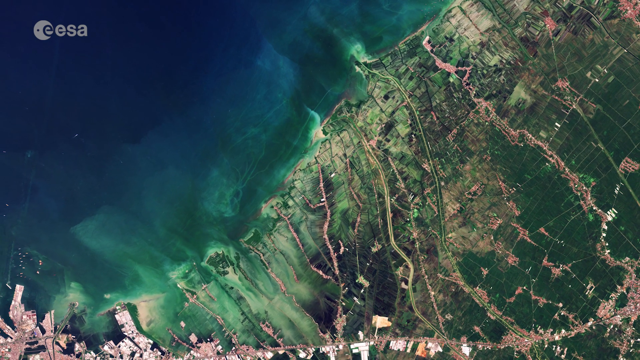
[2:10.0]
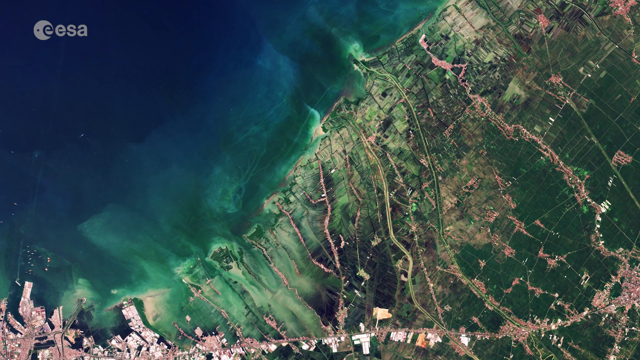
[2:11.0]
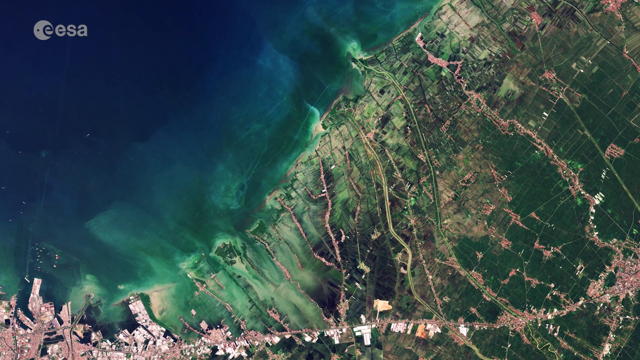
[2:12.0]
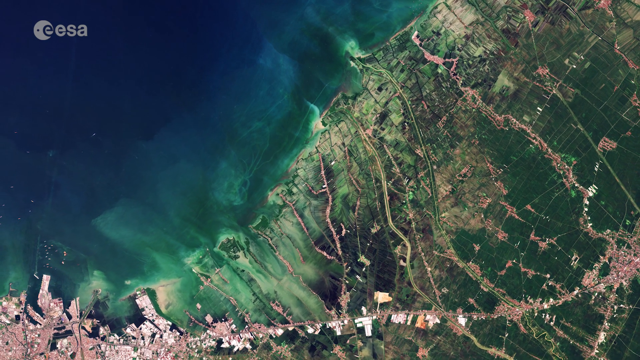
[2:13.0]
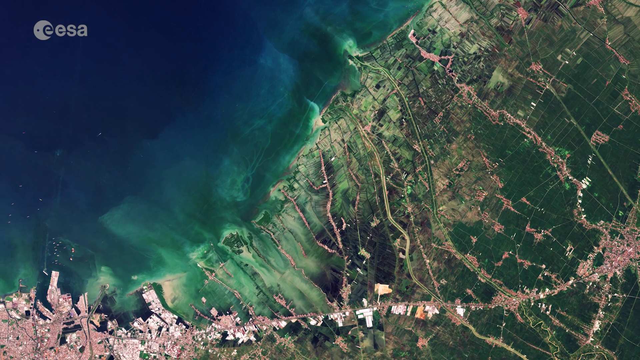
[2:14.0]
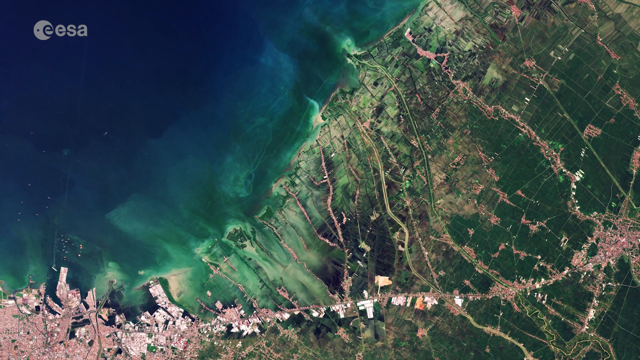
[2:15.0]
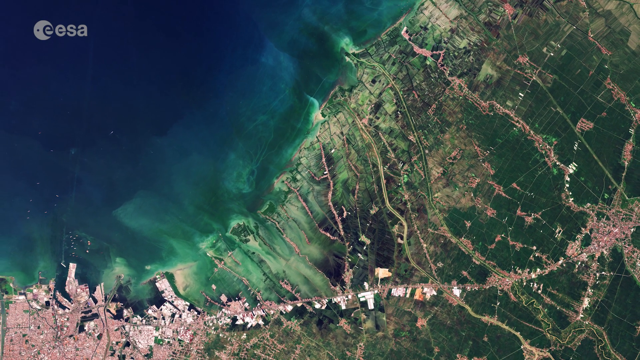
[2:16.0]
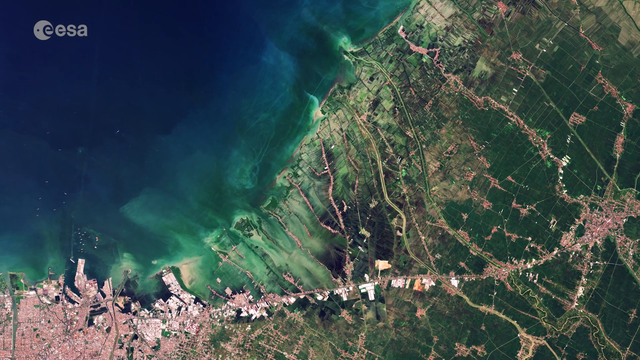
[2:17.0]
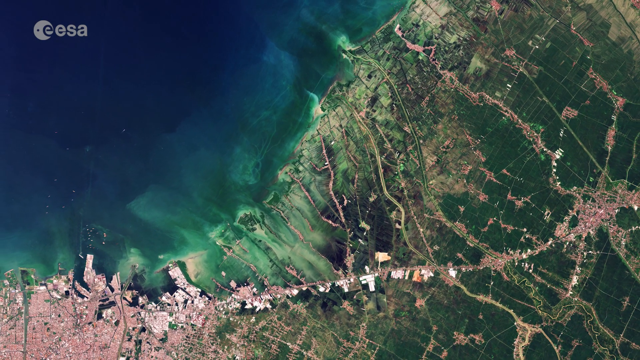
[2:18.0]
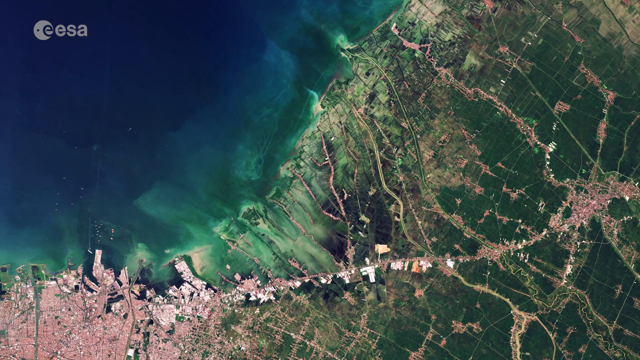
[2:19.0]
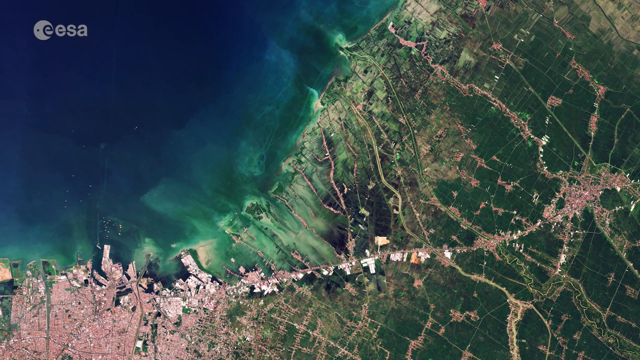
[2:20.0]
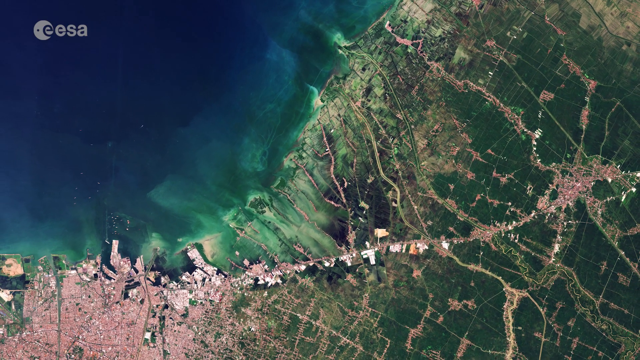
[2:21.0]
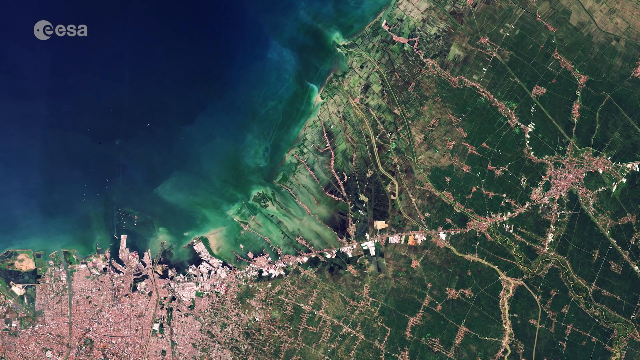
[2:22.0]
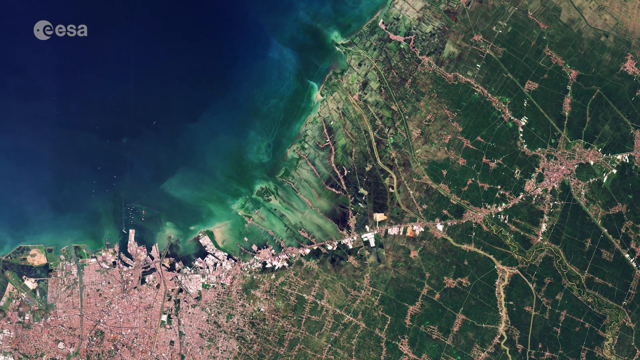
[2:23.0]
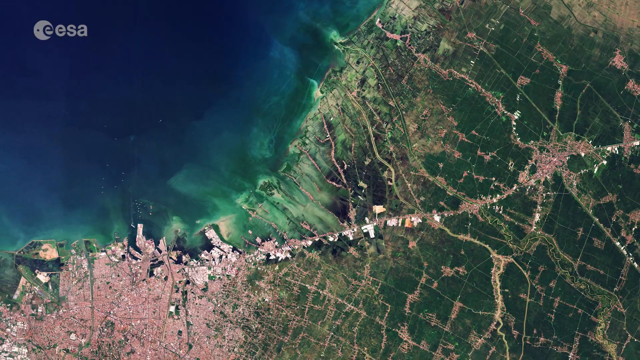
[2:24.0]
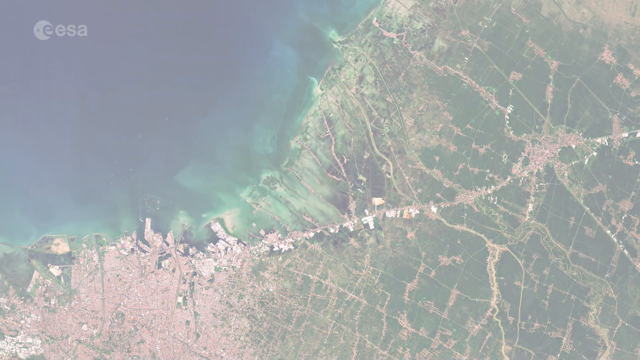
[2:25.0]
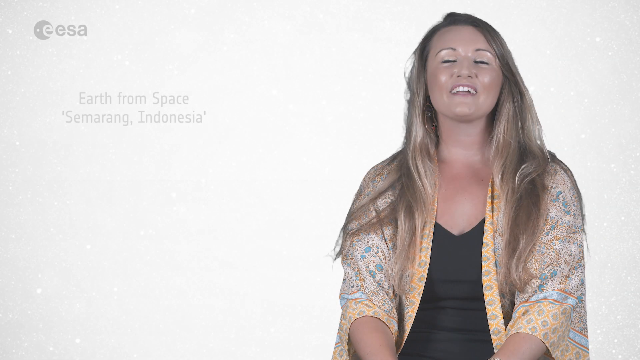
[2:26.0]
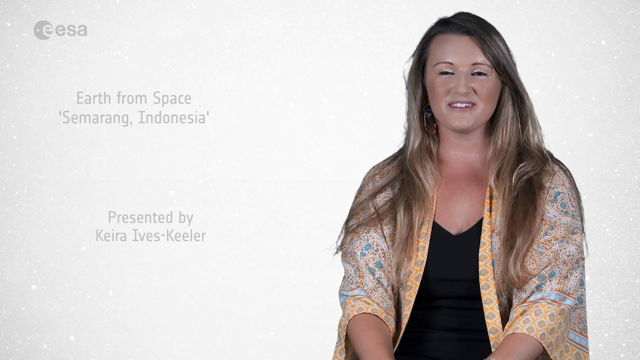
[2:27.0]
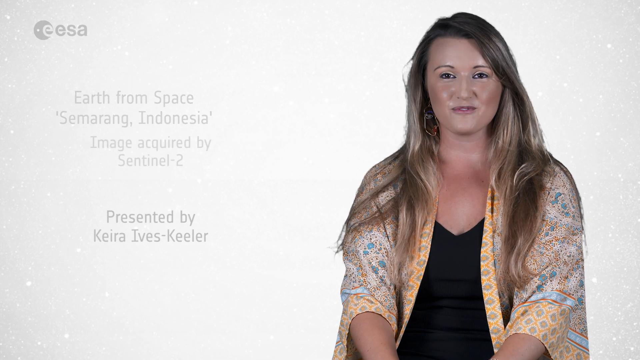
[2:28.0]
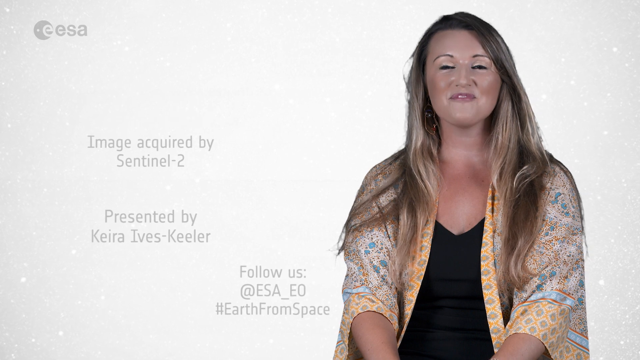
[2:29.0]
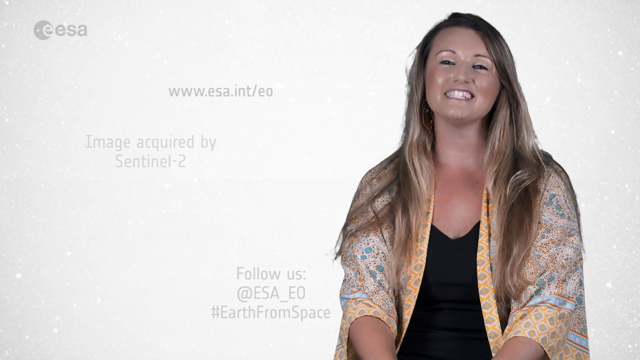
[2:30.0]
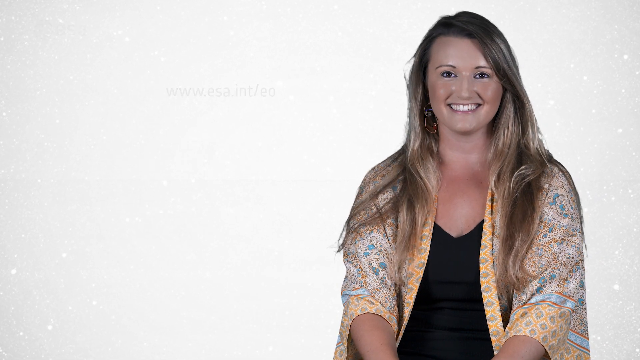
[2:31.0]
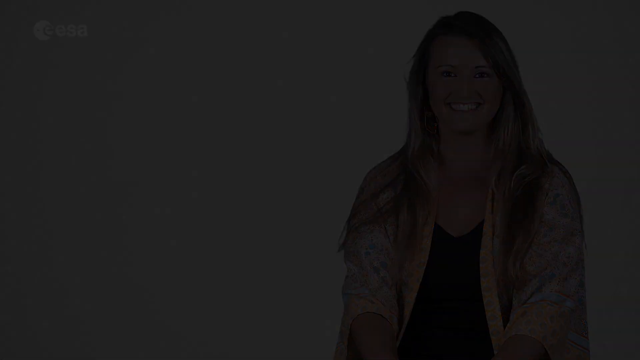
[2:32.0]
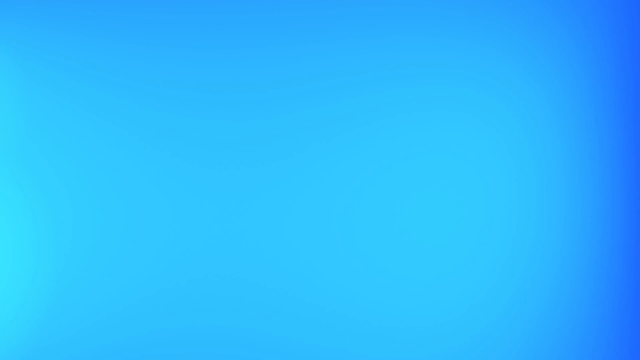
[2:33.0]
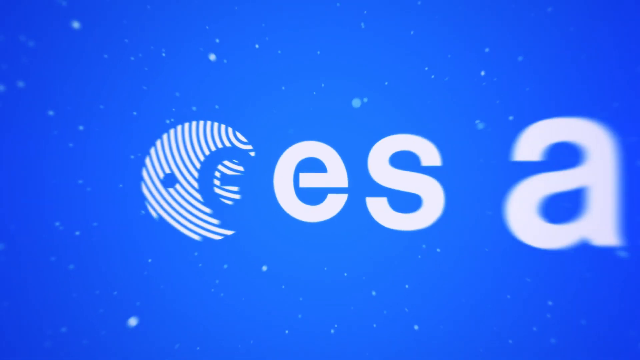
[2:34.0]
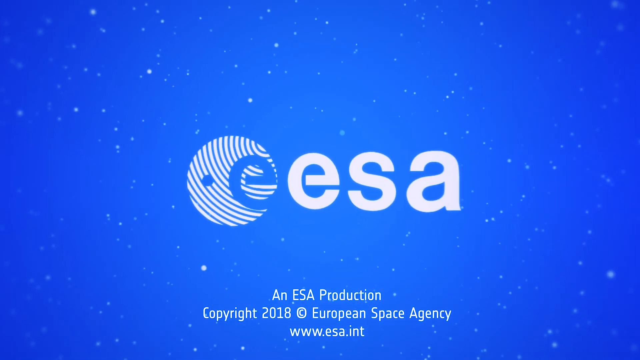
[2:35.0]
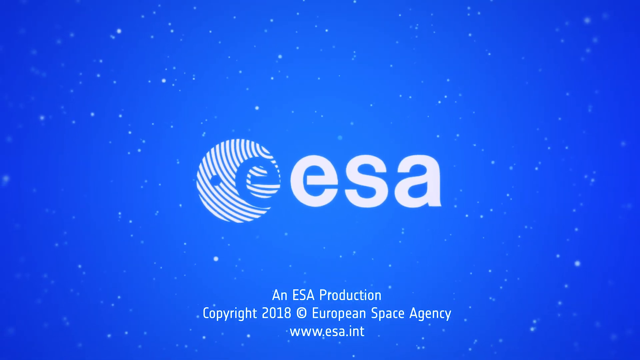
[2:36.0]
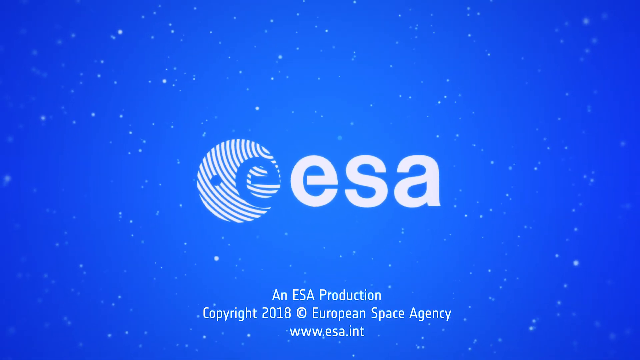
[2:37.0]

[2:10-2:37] The view zooms in on the landmass; the boxes and rectangles are not distinct, but dark green and light green are still visible, along with white lines leading toward the water at the top of the image, which is blue, dark blue, light blue and then a light greenish color. The view zooms out, and more and more rectangles and boxes representing areas of land become visible. The woman appears again, with the text "earth from space Semarang Indonesia image acquired from Sentinel-2 presented by Kiera Ives Keeler". She talks, smiles and nods her head. The screen goes black, then blue, and "EESA" appears again on a blue background with white stars, along with "copyright 2018 ESA production European Space Agency".